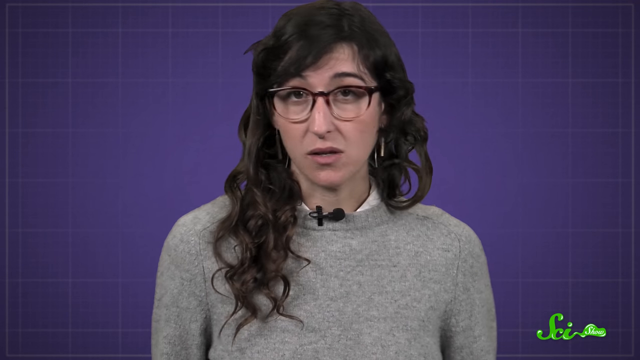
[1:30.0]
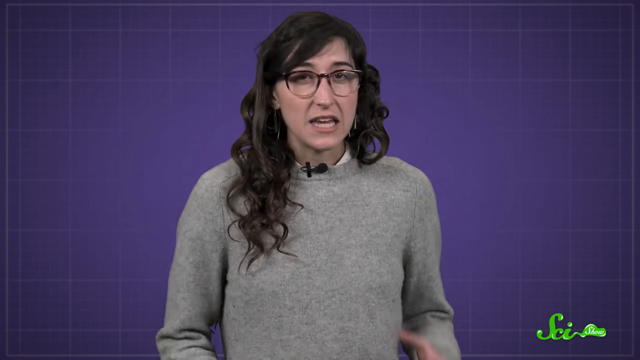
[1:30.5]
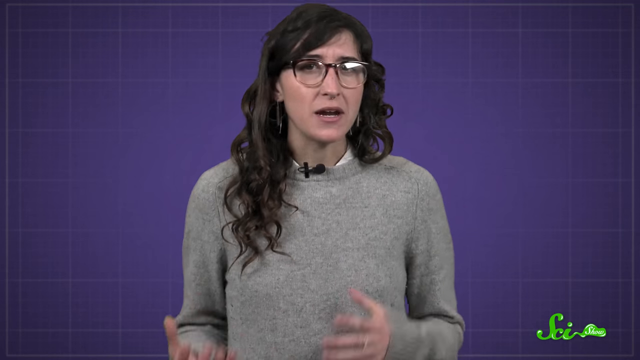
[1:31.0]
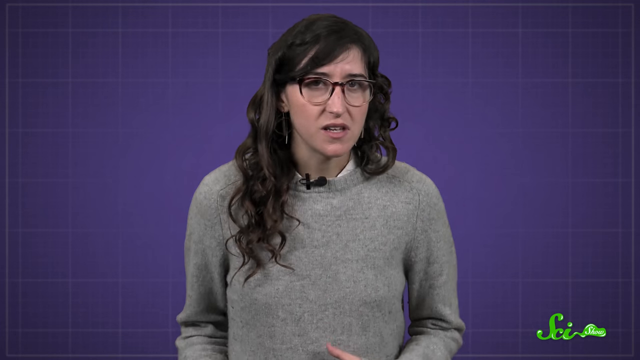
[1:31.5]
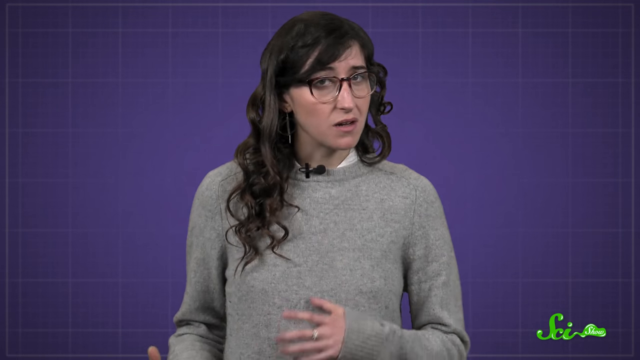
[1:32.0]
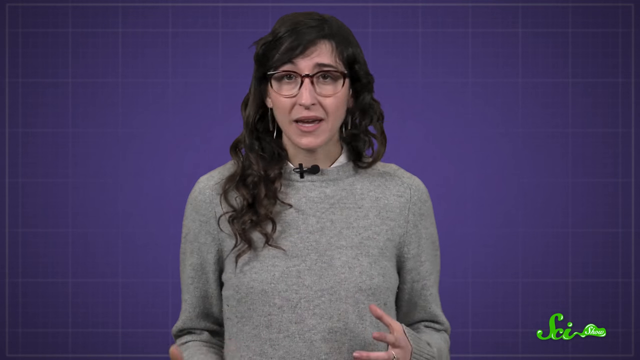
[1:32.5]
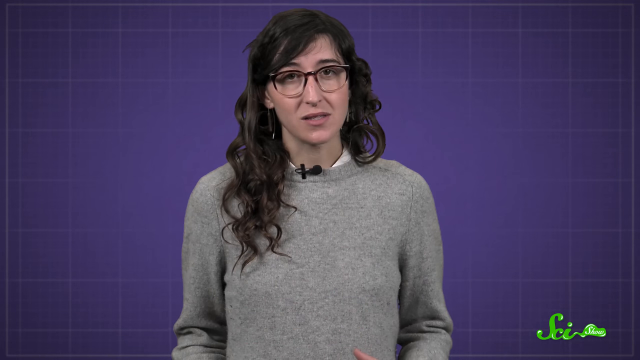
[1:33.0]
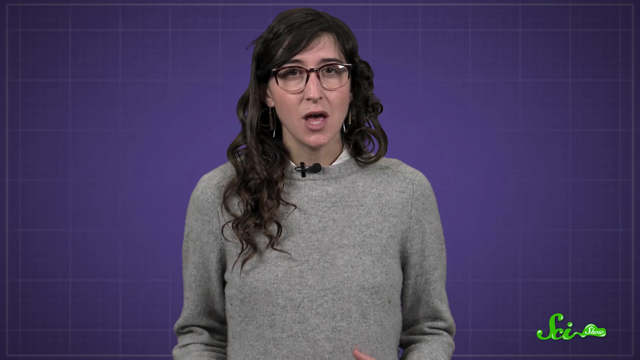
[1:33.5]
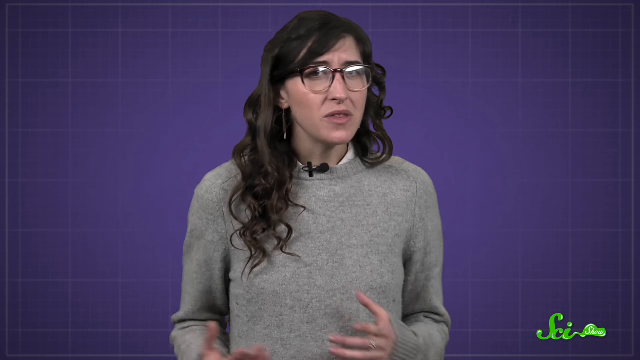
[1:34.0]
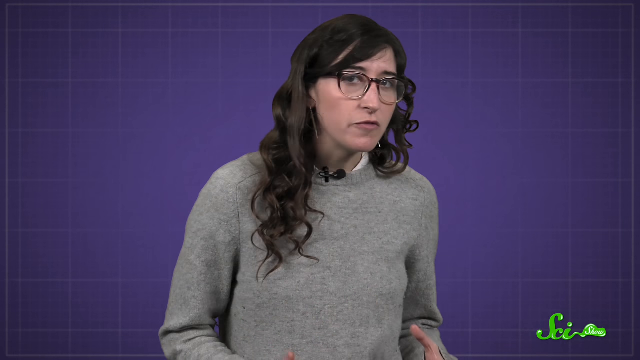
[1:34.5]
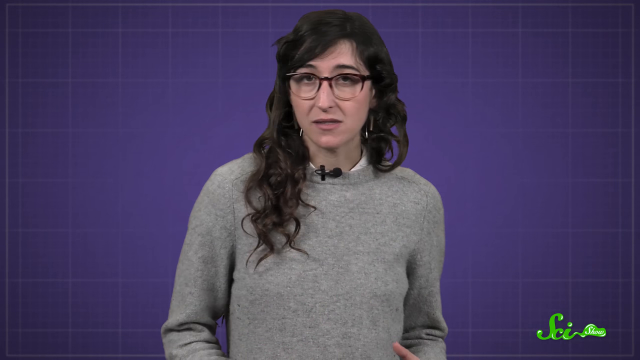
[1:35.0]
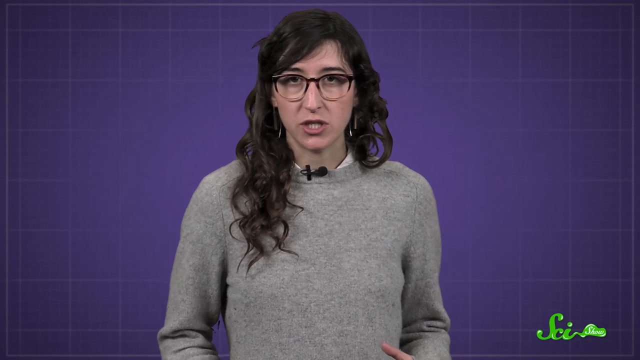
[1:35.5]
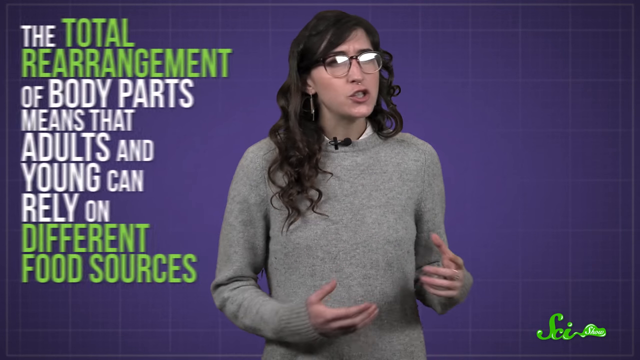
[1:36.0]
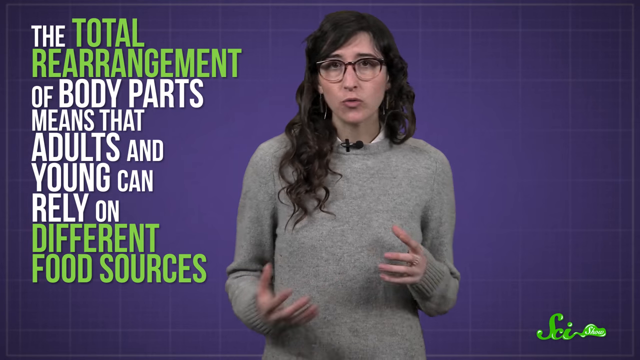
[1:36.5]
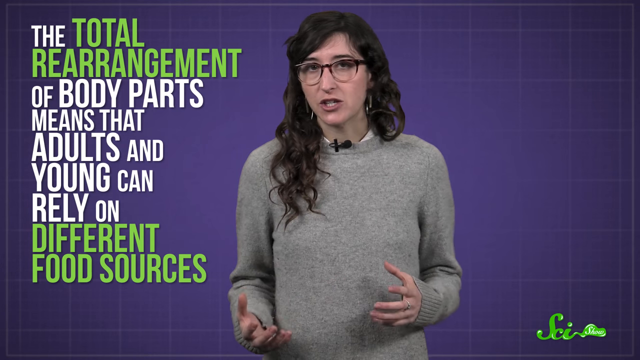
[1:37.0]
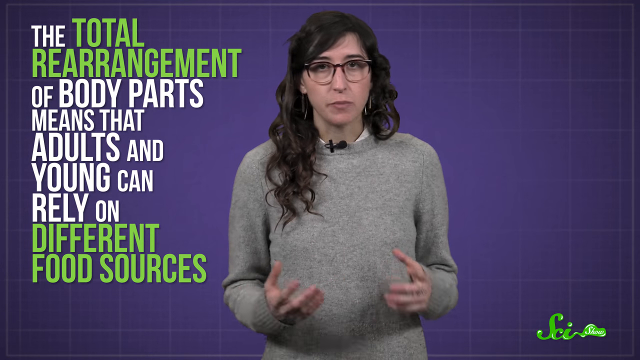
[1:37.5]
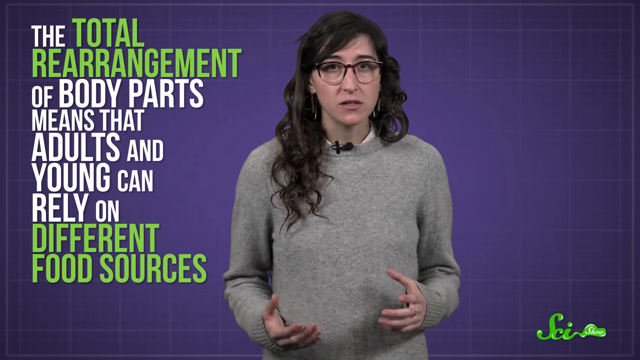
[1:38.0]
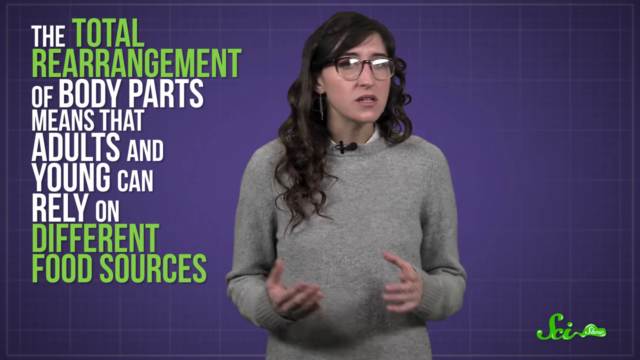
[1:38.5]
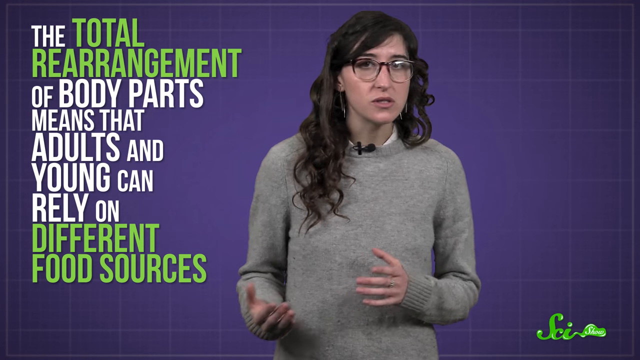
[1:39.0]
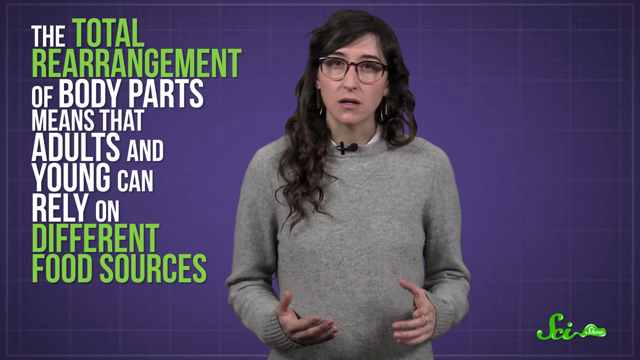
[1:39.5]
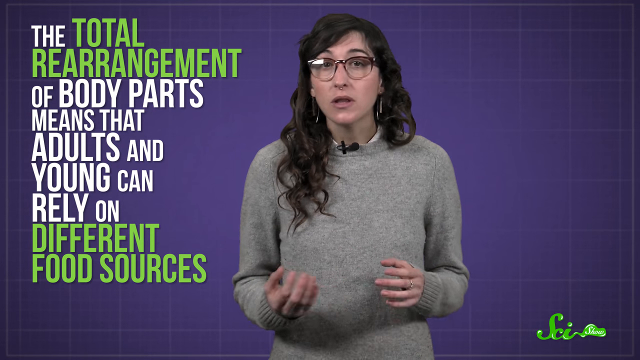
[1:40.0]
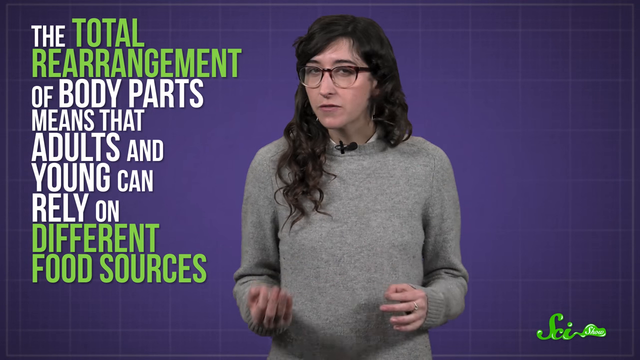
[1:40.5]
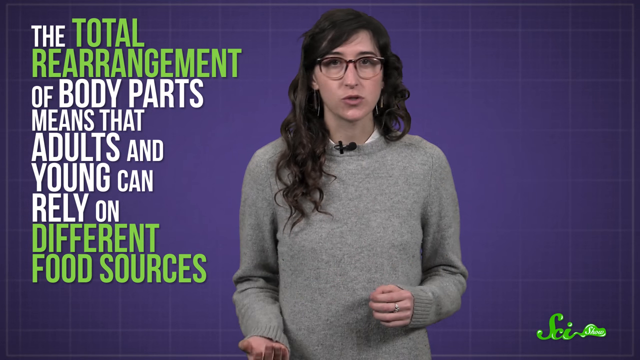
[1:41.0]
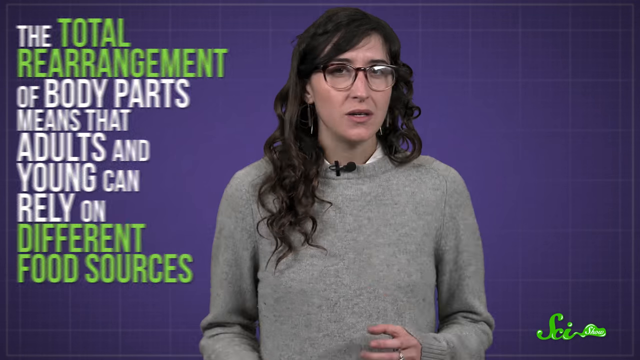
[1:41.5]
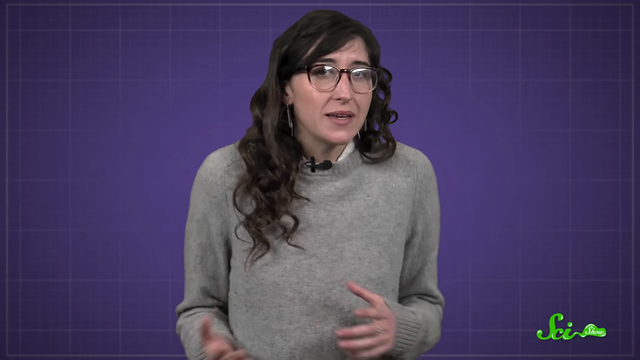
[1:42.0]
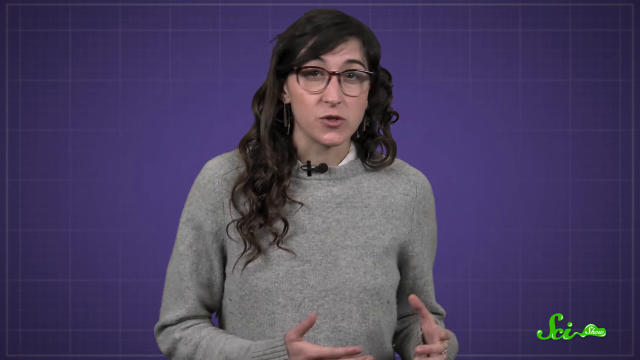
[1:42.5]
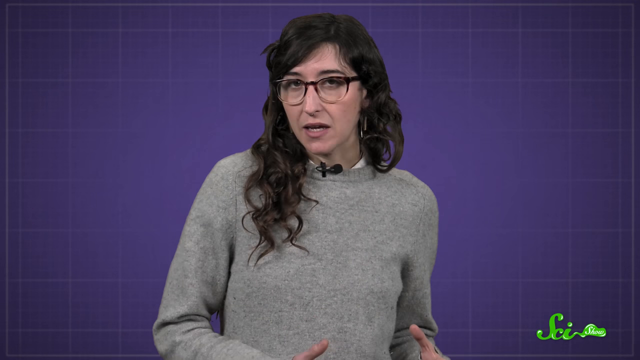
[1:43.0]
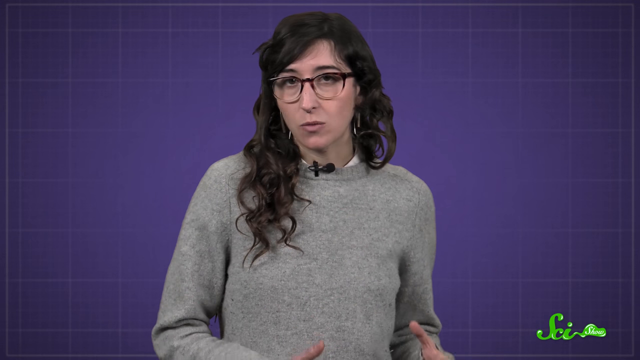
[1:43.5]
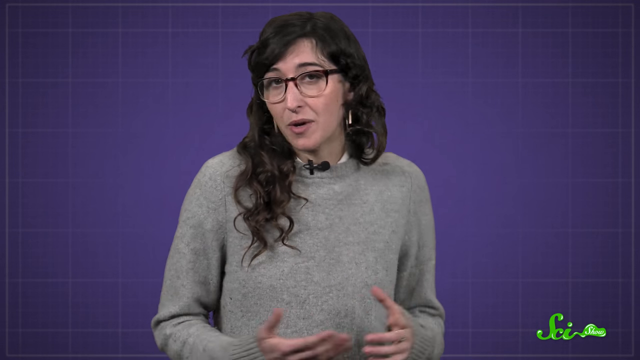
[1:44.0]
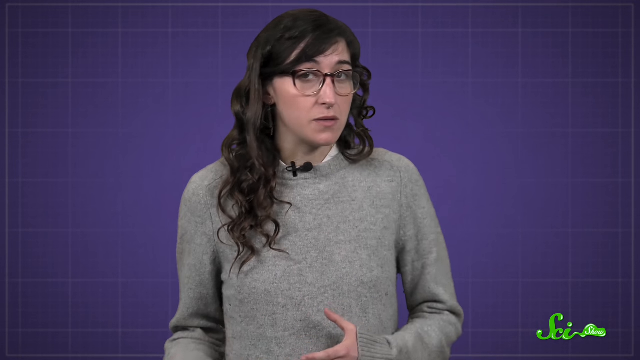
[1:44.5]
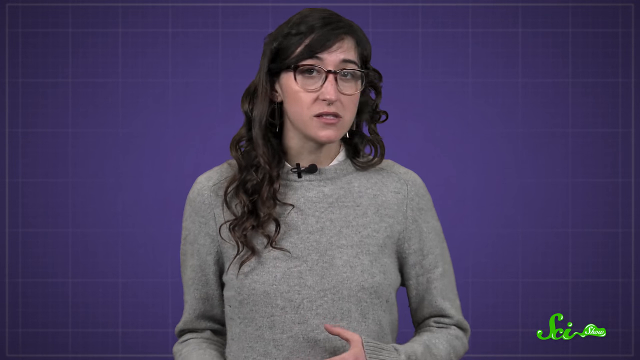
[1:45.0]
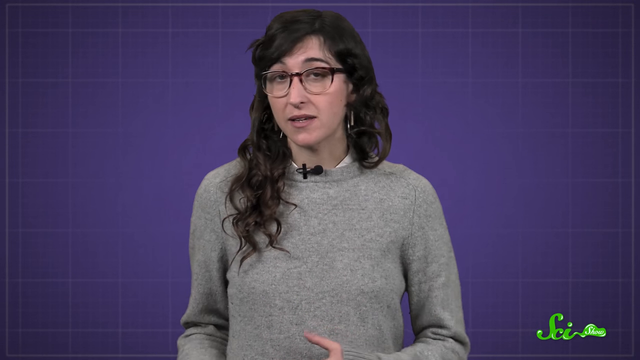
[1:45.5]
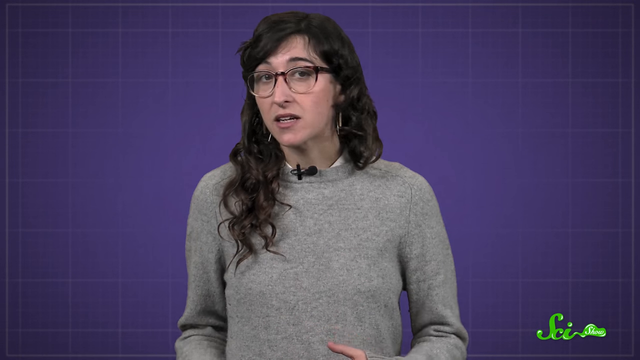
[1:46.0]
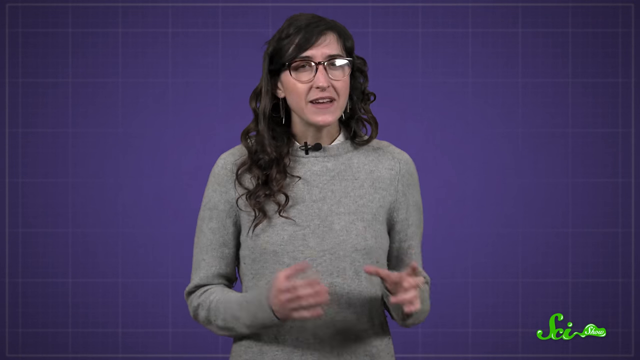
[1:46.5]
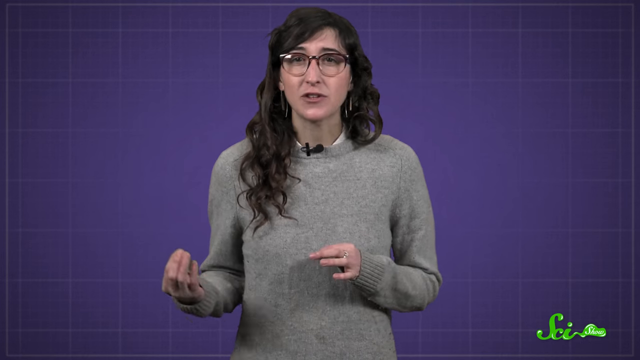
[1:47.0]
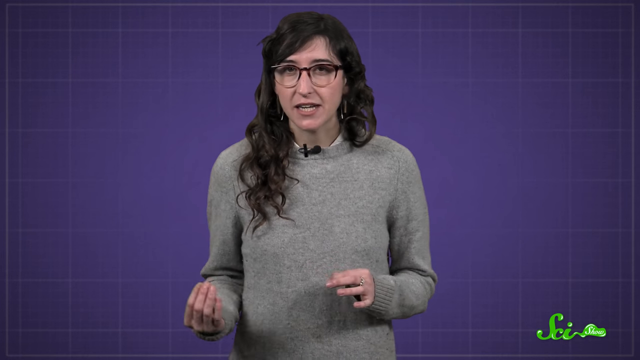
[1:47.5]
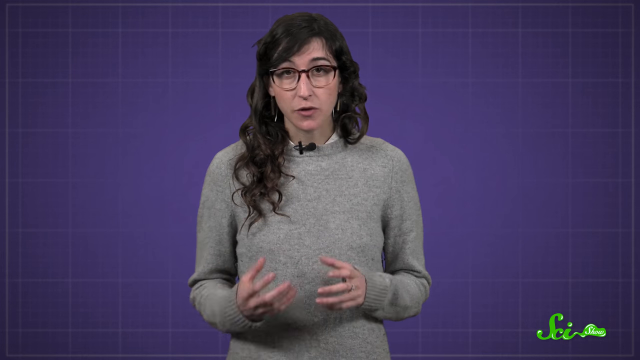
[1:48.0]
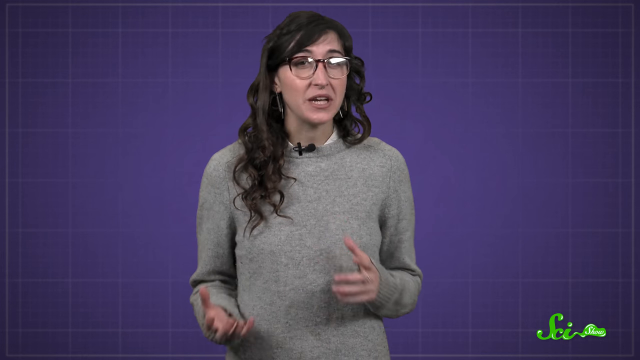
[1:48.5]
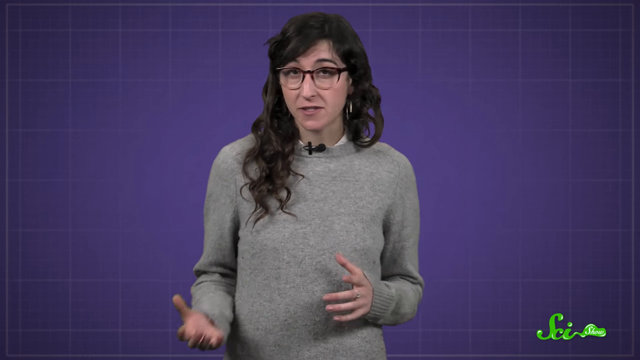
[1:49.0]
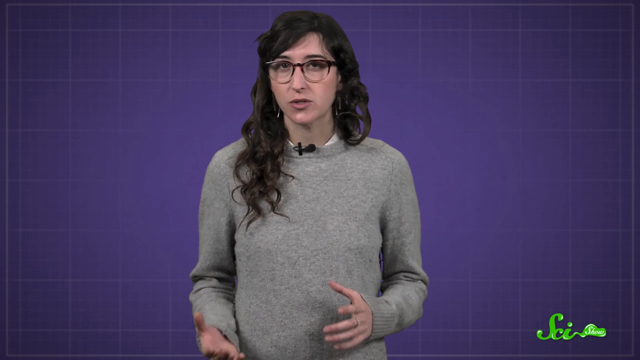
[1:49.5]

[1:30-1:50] The woman is still talking in front of the purple grid background. She says "the total rearrangement of body parts means that adults and young can rely on different food sources." The on-screen fact is in all capital letters, with some words a little bigger than others; "total rearrangement" and "different food sources" are in green, and everything else is in white. She has long brown hair and glasses, looks like a science-y type person, talks with her hands a little, and has a microphone clipped to her sweater collar.